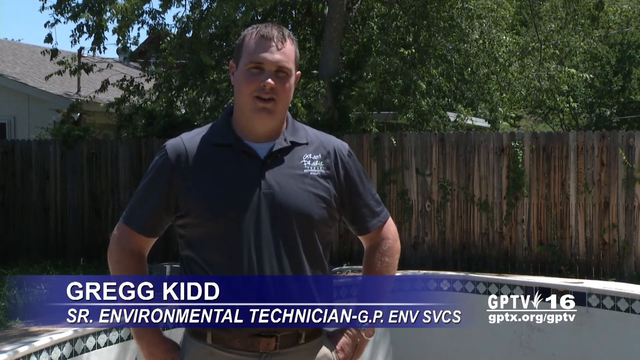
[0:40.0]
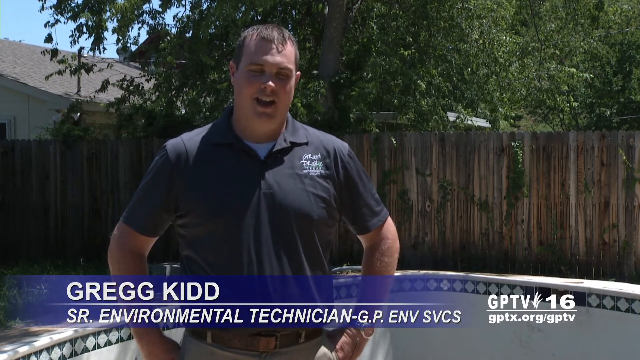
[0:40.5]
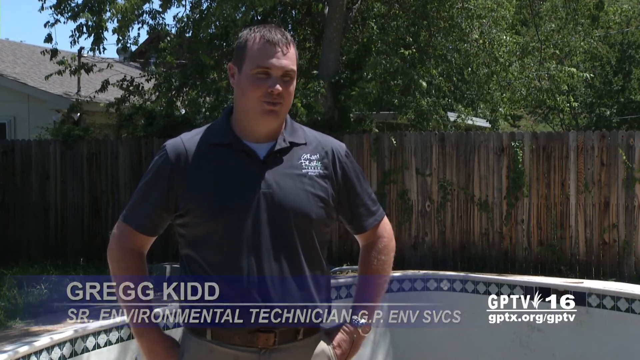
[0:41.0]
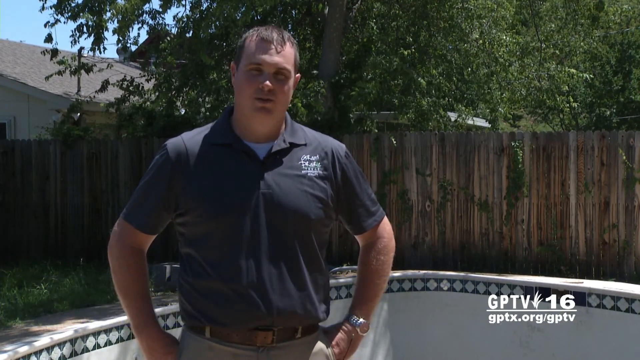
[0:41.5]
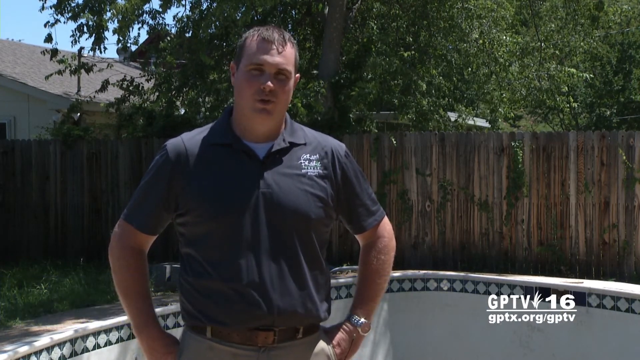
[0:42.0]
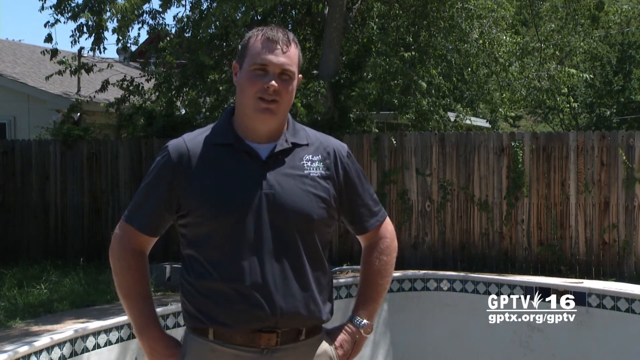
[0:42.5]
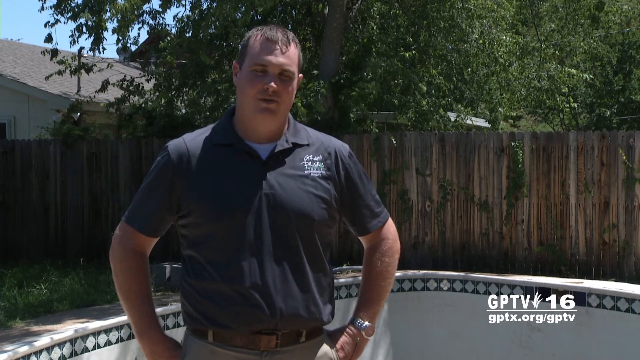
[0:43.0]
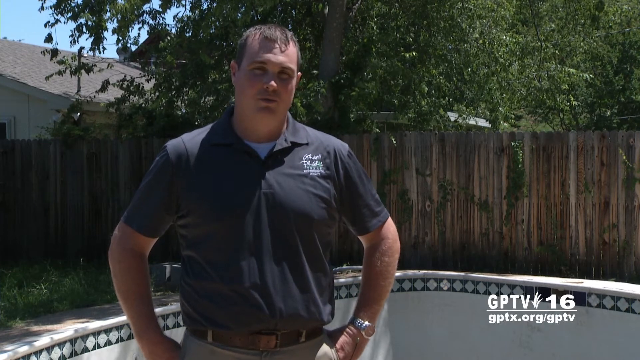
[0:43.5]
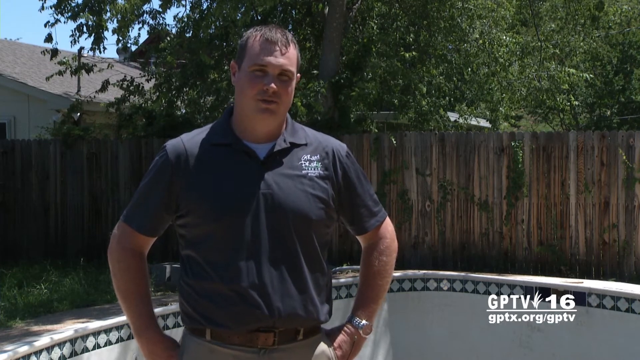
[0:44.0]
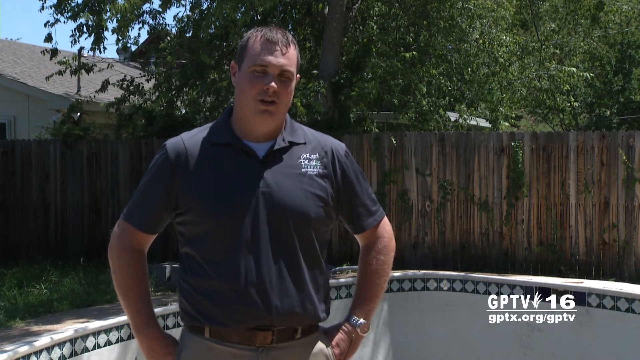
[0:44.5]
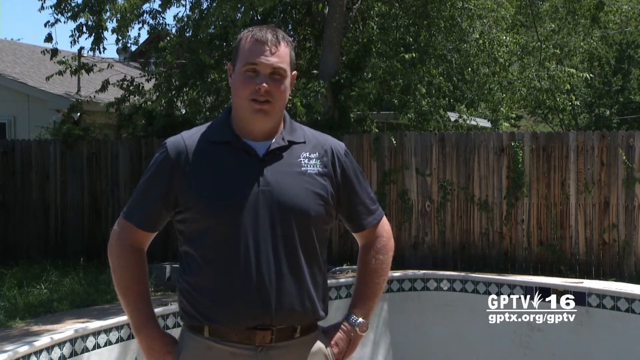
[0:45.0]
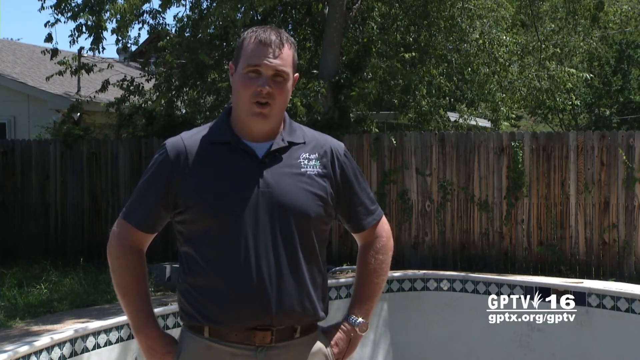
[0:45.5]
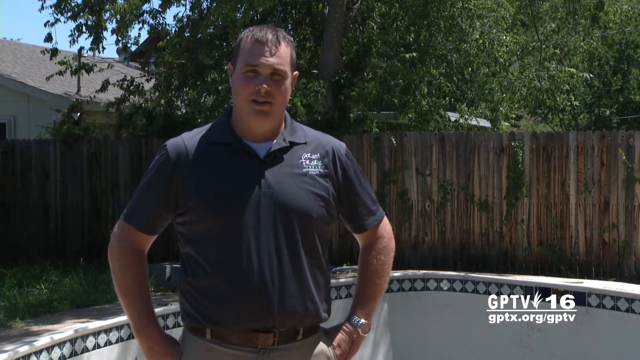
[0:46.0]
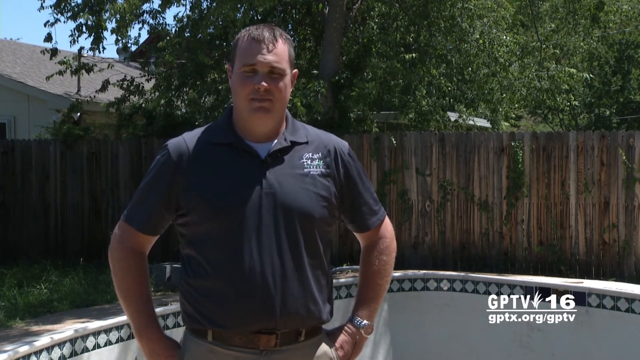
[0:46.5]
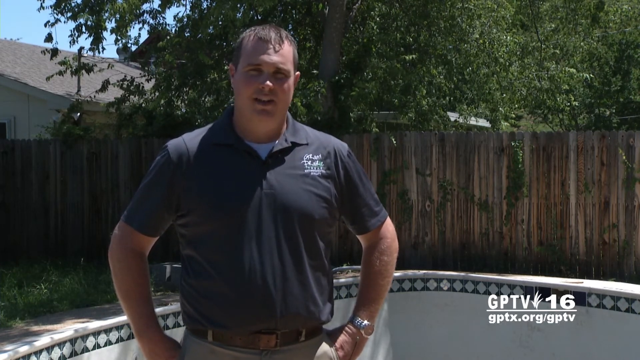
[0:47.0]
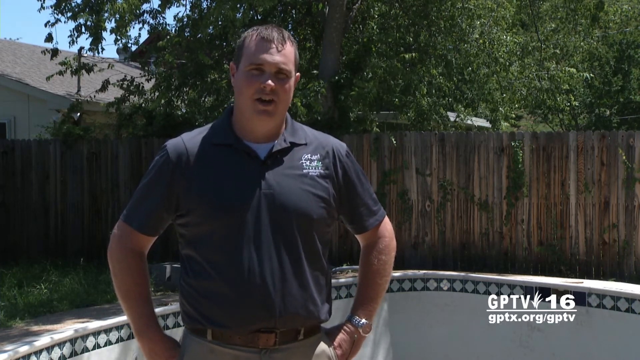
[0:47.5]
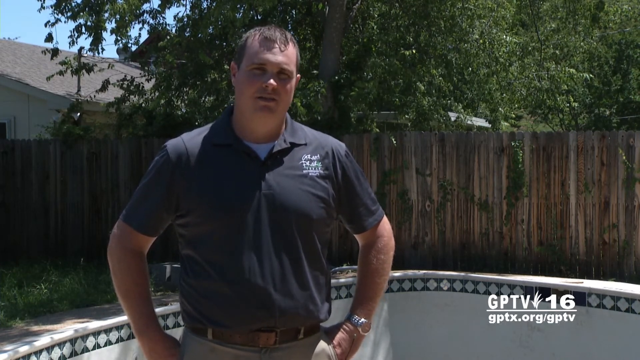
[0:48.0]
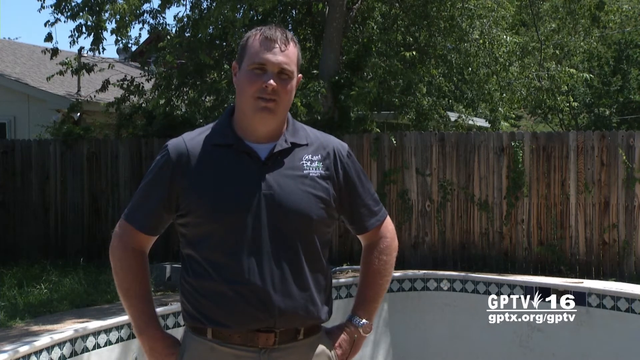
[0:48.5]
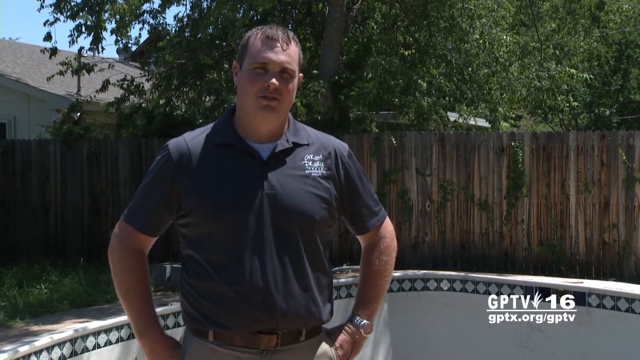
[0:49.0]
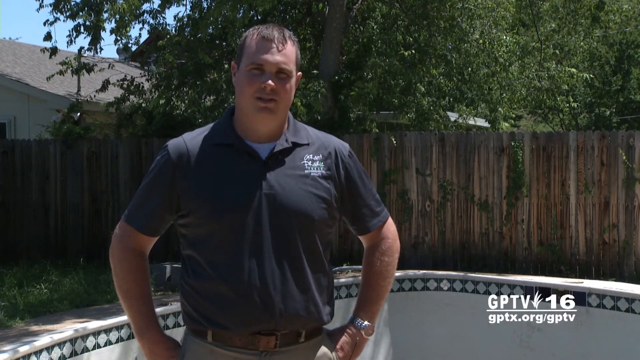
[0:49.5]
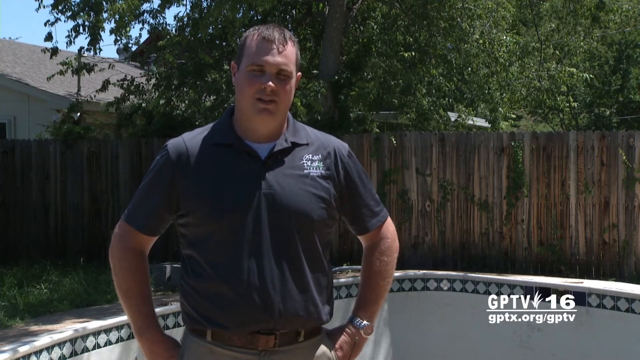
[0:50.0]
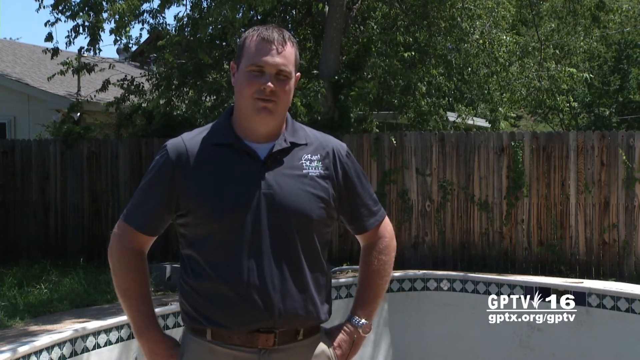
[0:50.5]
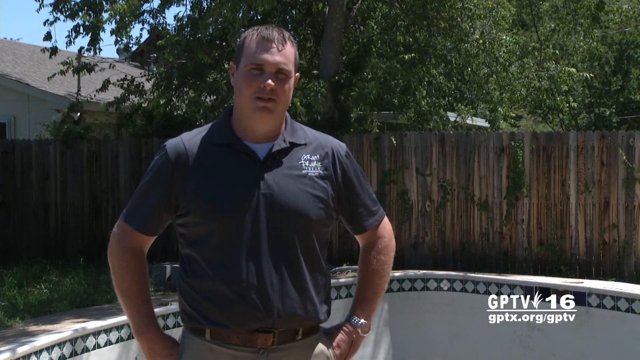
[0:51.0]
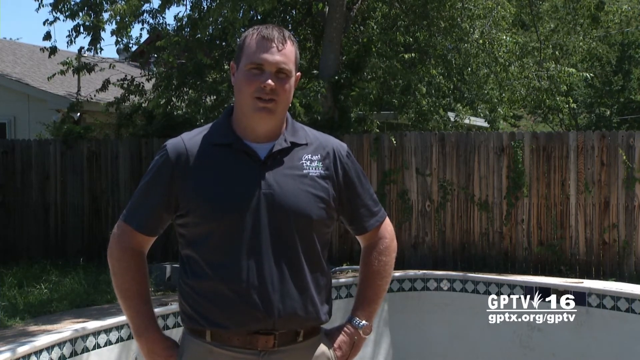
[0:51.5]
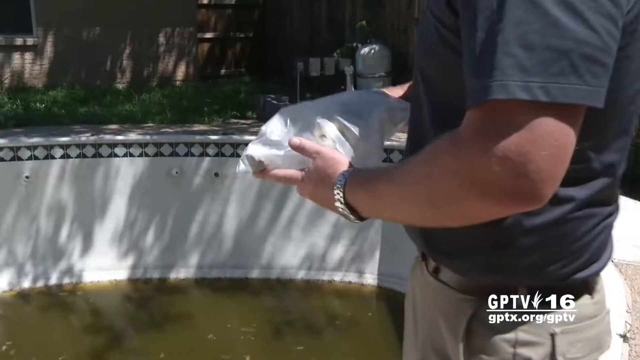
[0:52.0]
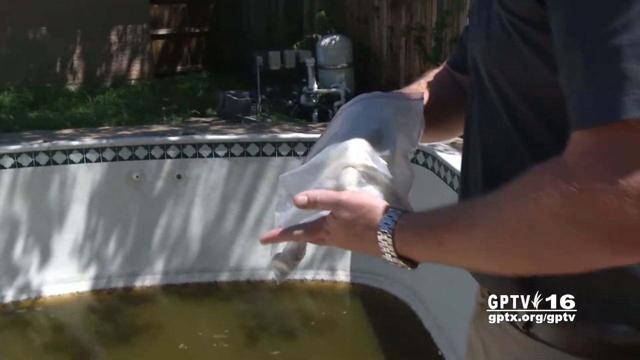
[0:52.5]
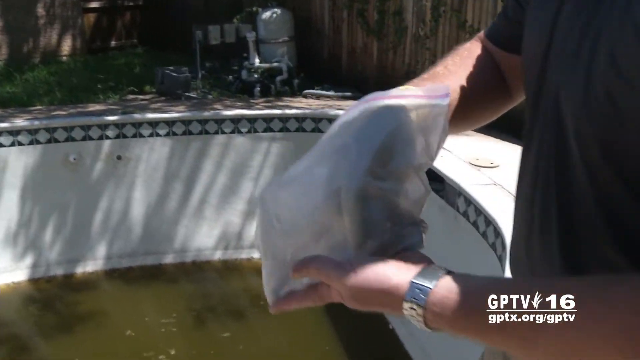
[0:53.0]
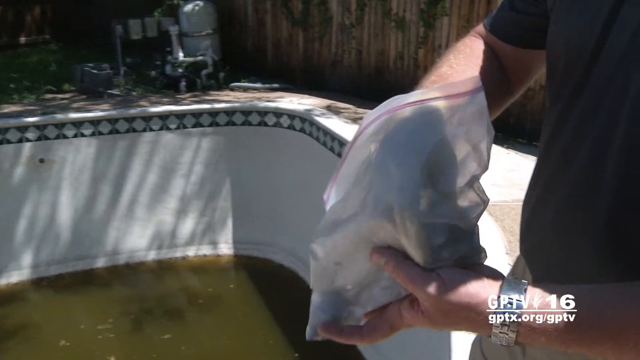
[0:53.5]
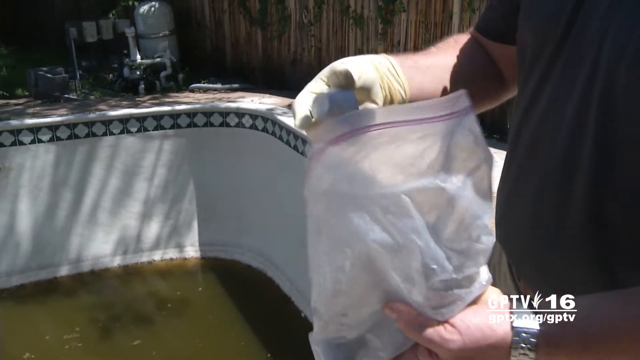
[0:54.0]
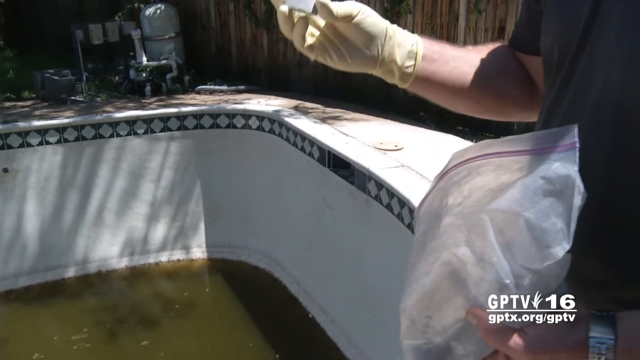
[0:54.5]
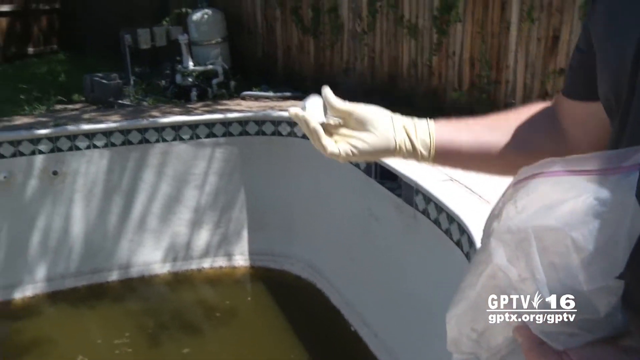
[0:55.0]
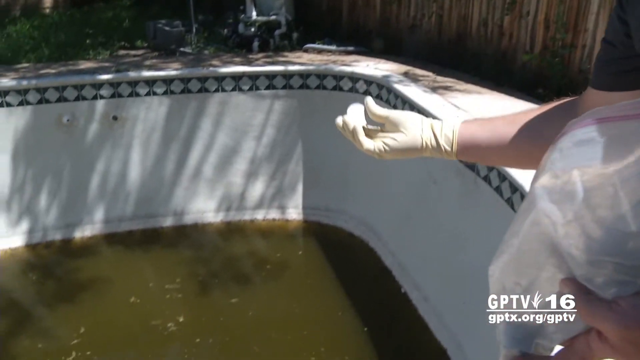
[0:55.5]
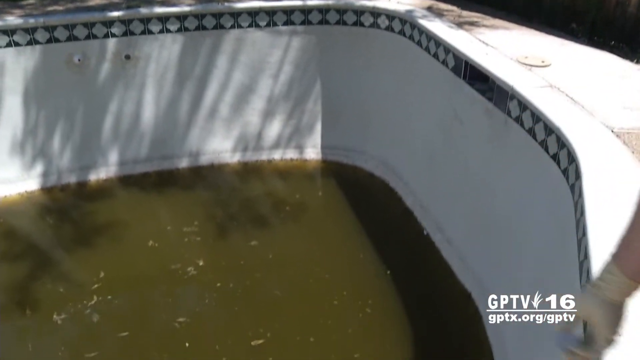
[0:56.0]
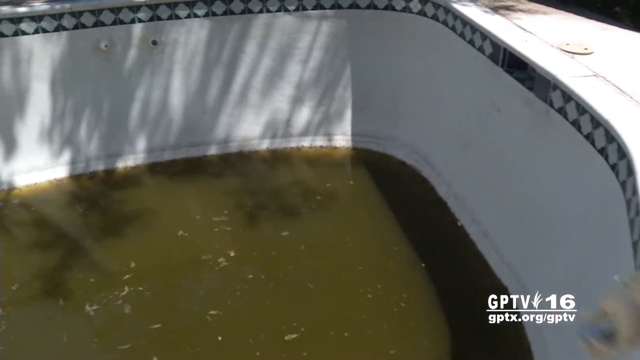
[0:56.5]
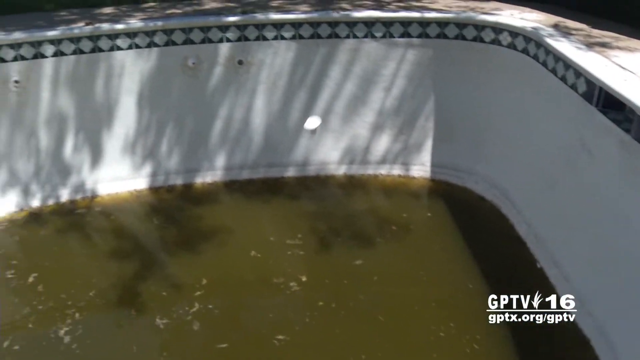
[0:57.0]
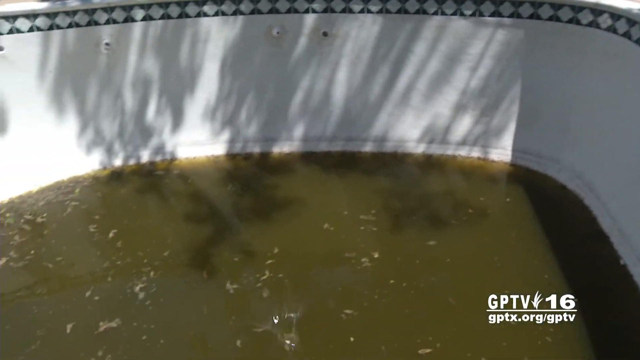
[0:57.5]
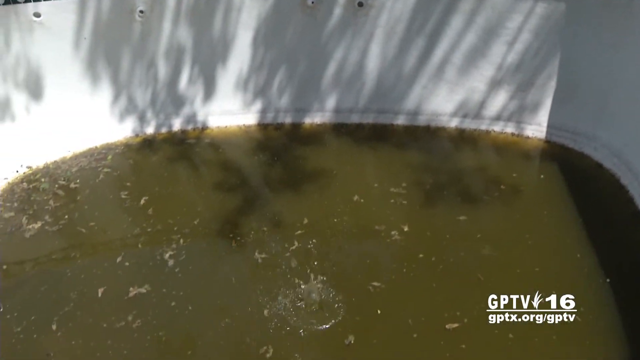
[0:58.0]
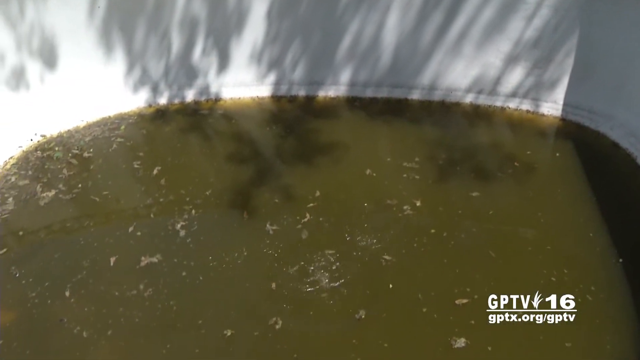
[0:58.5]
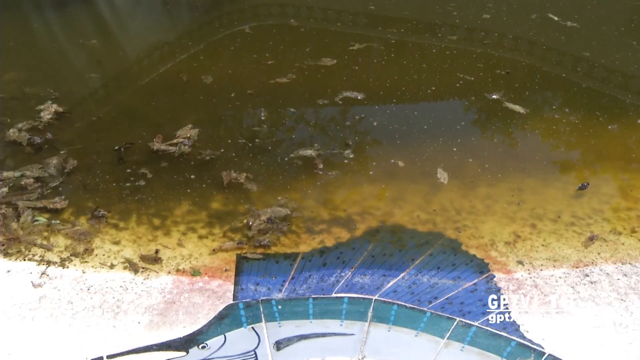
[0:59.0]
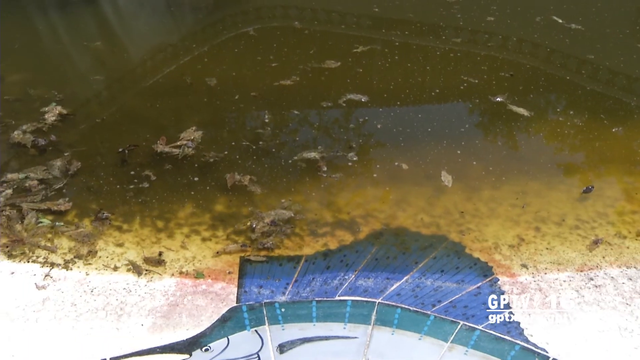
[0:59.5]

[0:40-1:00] A man stands in front of a swimming pool that has largely been drained, labeled "Greg Kidd, Senior Environmental Technician, GP Environmental Services". He is visible from the waist up with both hands on his hips, looking forward toward the camera and talking. He looks briefly toward the bottom right of the screen, then back at the camera, moving his head back and forth as he talks. The video cuts to the man on the edge of the swimming pool, whose entire bottom layer is full of green, thick water. He holds a plastic bag in his left hand and reaches into it with his right hand, which comes out covered with a yellow latex glove. He pulls a white cube out of the bag and throws it into the stagnant green water of the pool.